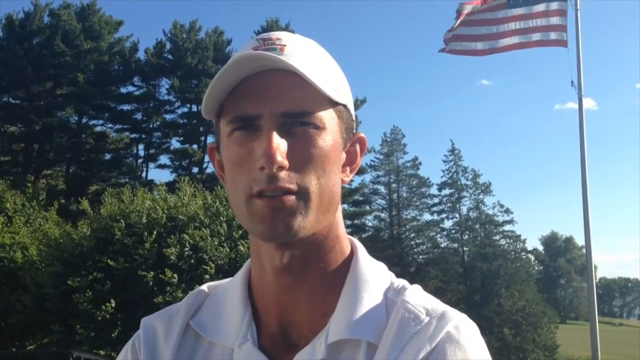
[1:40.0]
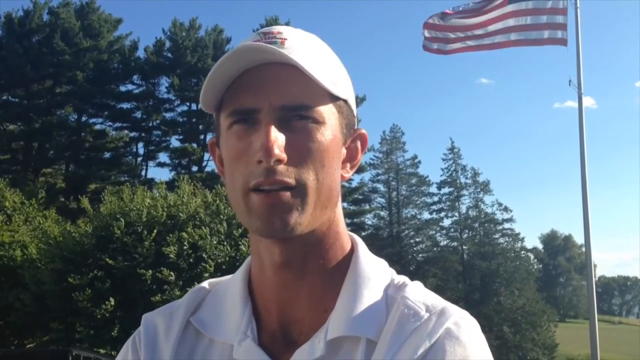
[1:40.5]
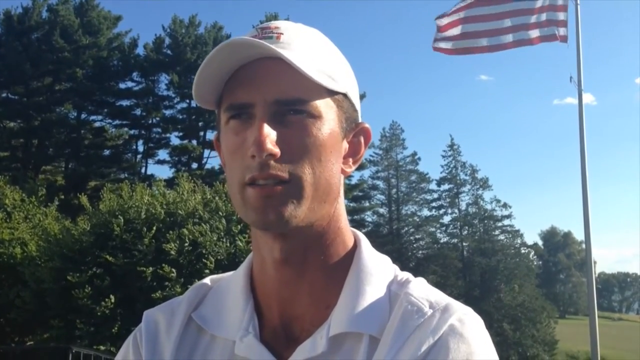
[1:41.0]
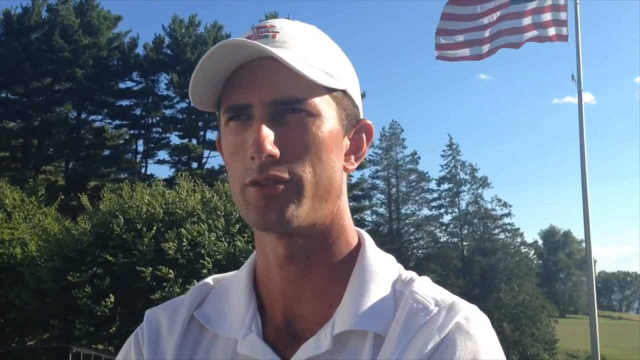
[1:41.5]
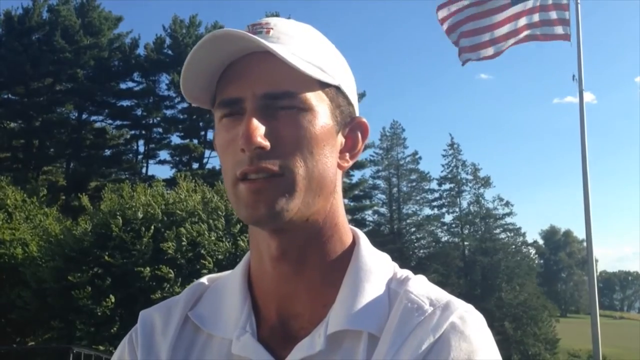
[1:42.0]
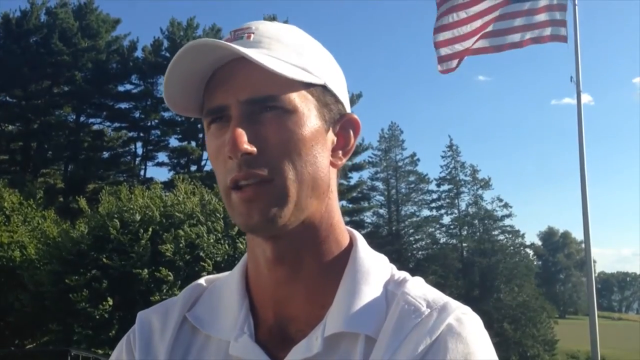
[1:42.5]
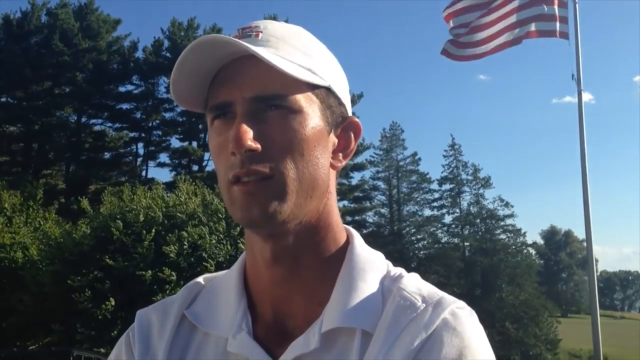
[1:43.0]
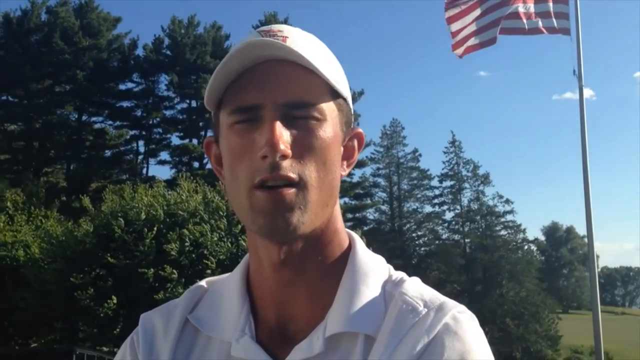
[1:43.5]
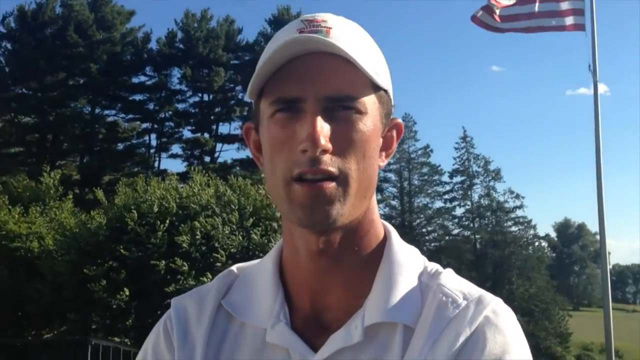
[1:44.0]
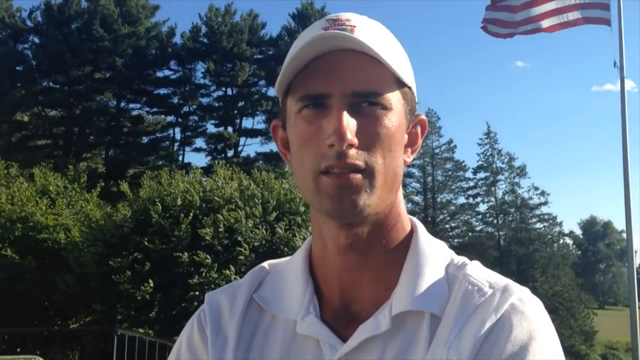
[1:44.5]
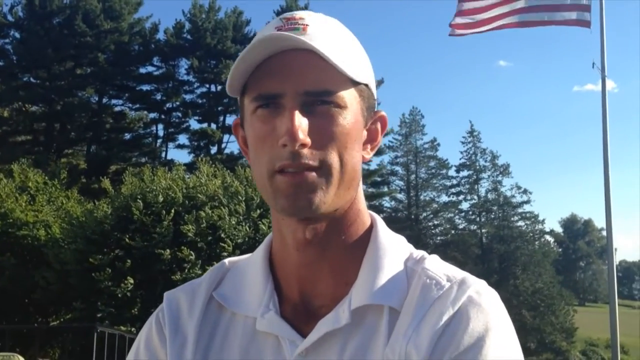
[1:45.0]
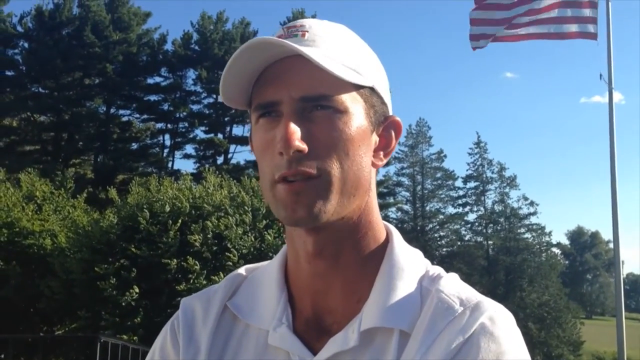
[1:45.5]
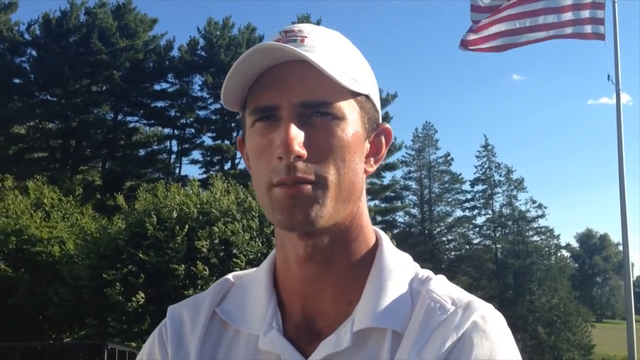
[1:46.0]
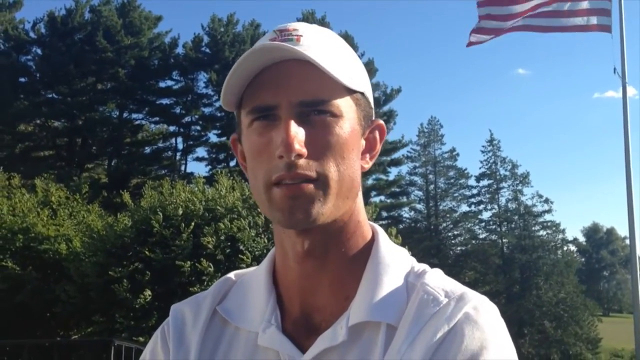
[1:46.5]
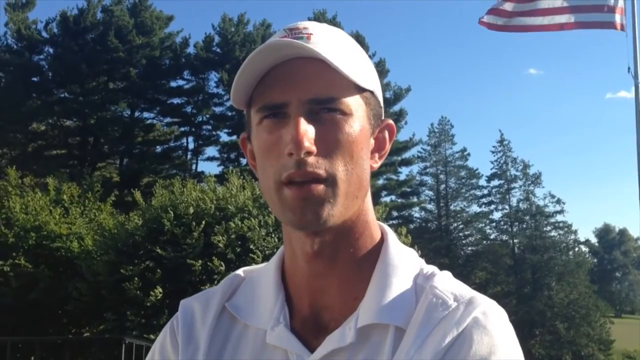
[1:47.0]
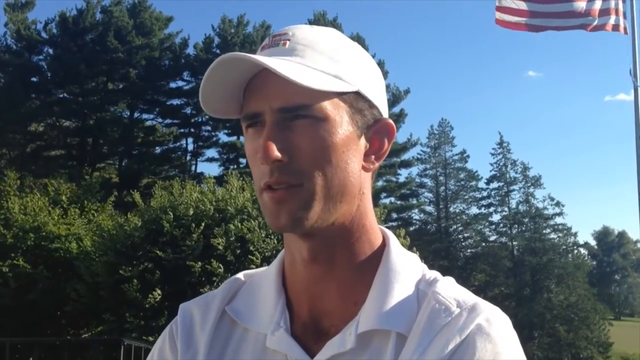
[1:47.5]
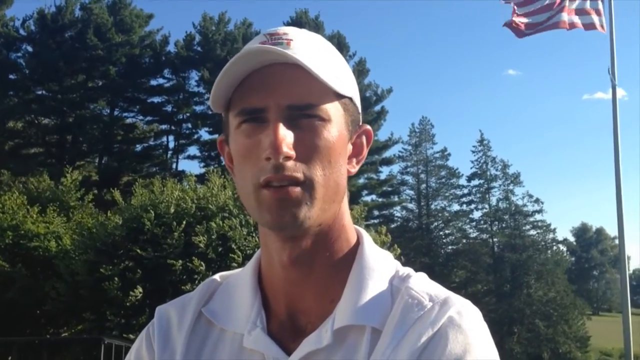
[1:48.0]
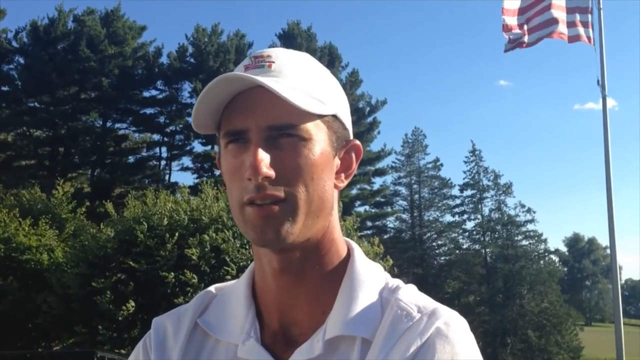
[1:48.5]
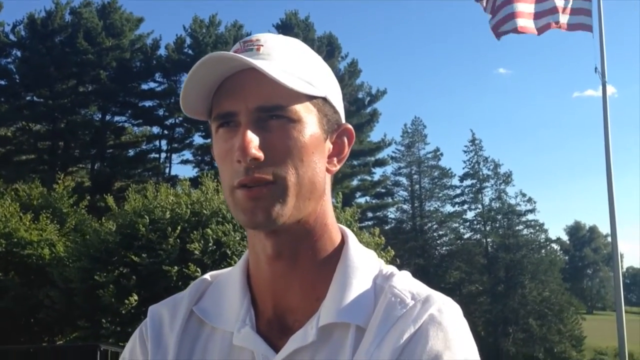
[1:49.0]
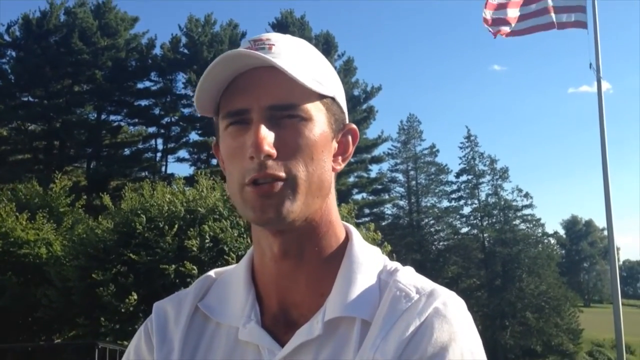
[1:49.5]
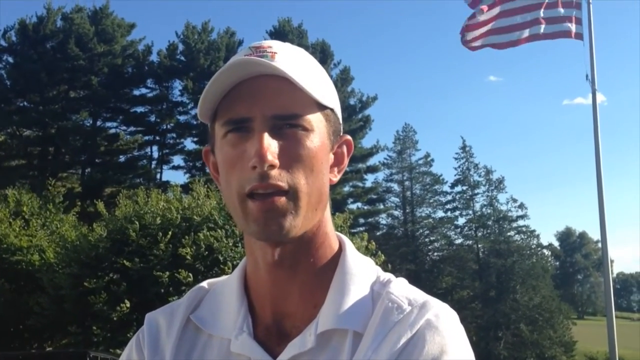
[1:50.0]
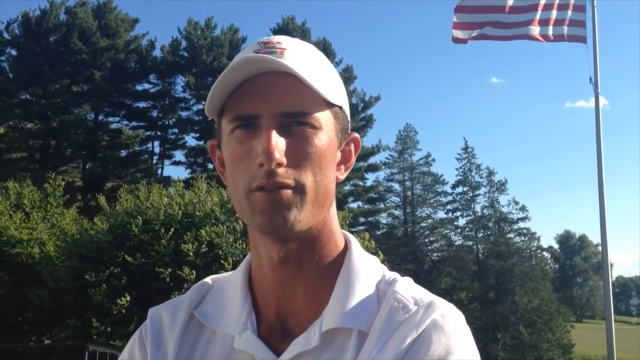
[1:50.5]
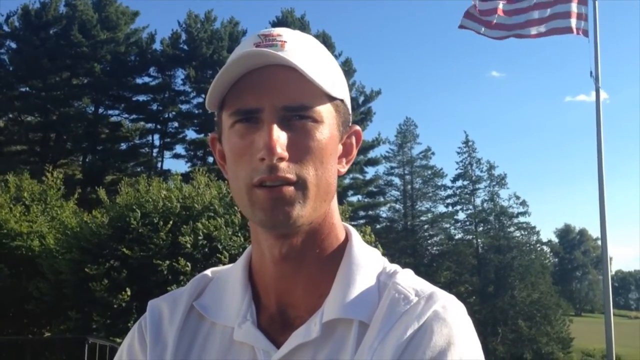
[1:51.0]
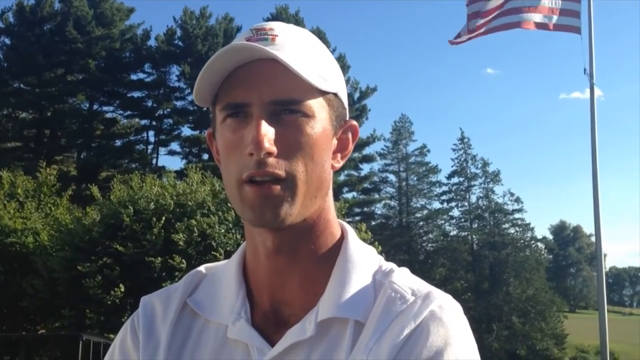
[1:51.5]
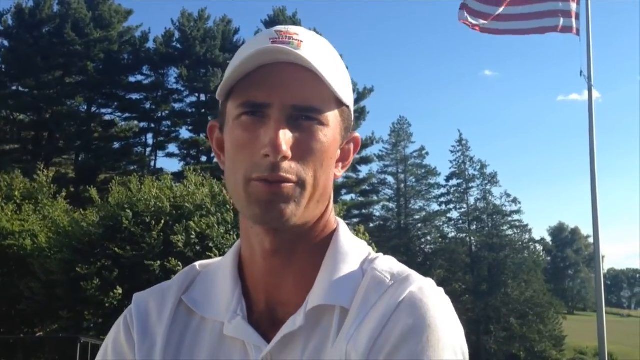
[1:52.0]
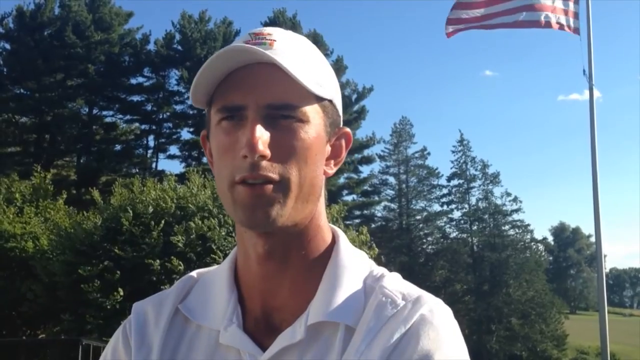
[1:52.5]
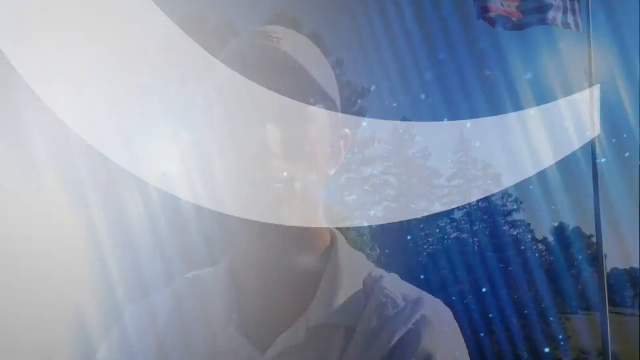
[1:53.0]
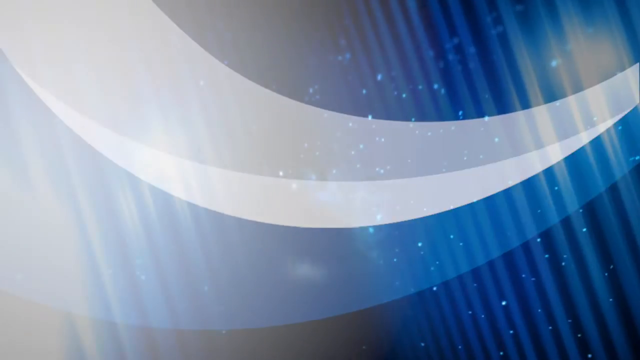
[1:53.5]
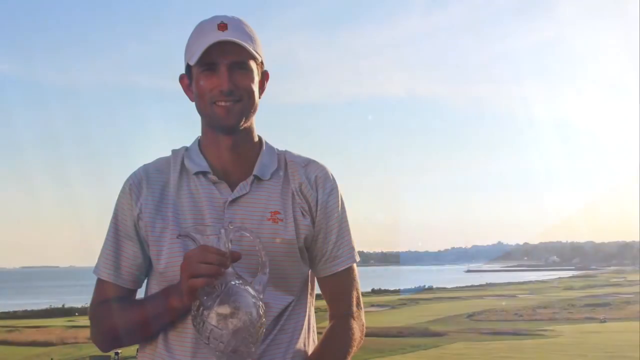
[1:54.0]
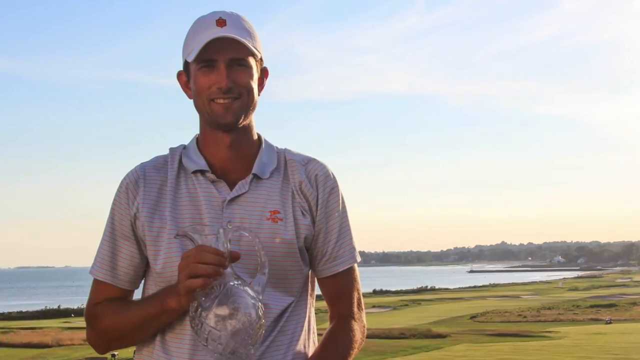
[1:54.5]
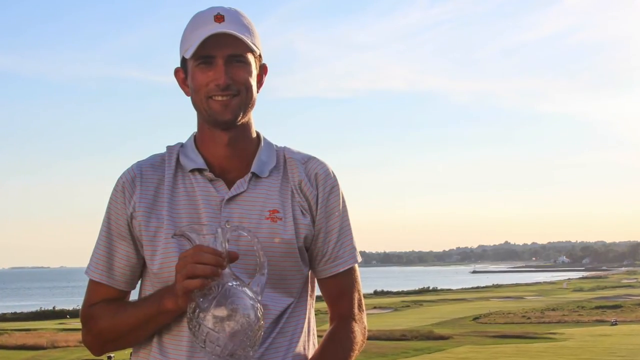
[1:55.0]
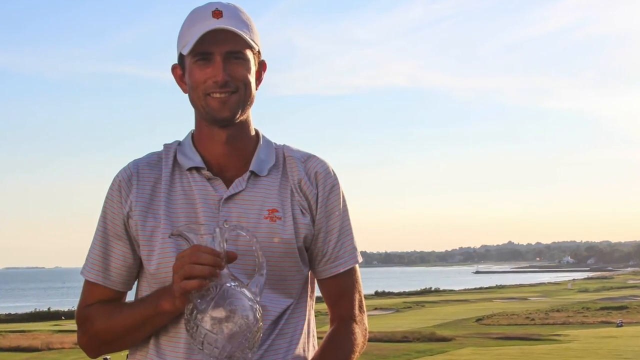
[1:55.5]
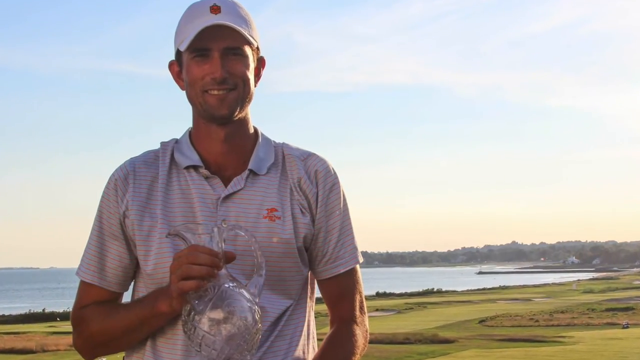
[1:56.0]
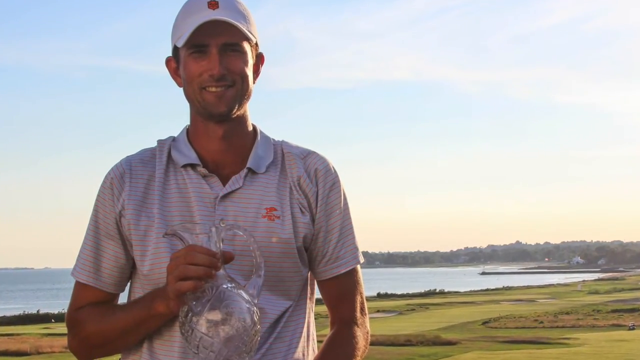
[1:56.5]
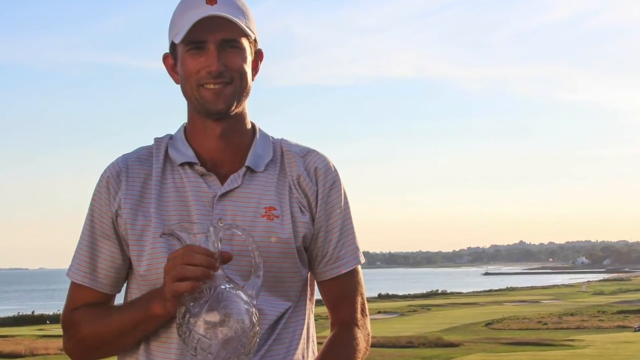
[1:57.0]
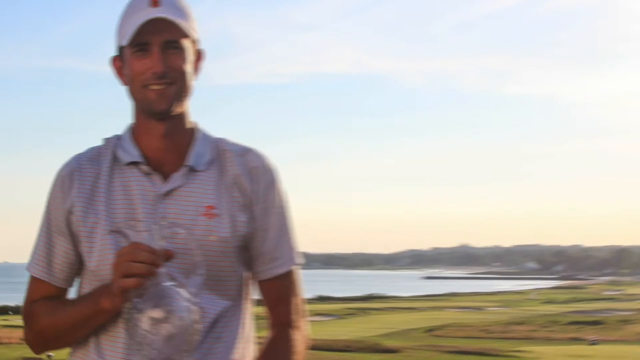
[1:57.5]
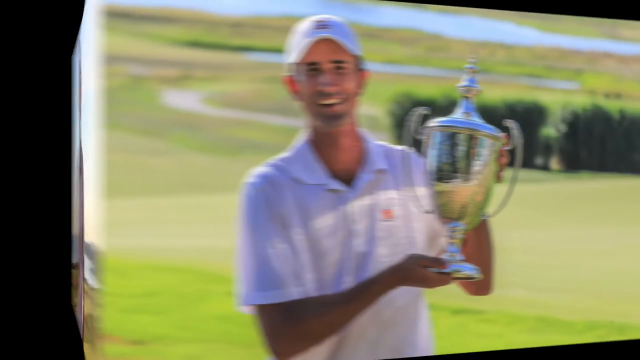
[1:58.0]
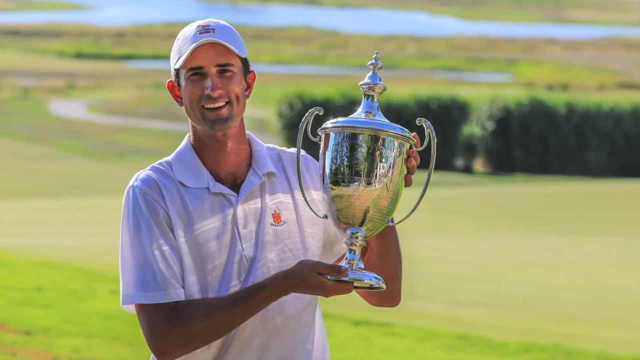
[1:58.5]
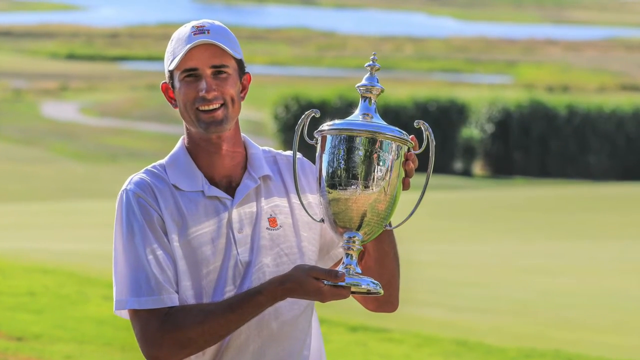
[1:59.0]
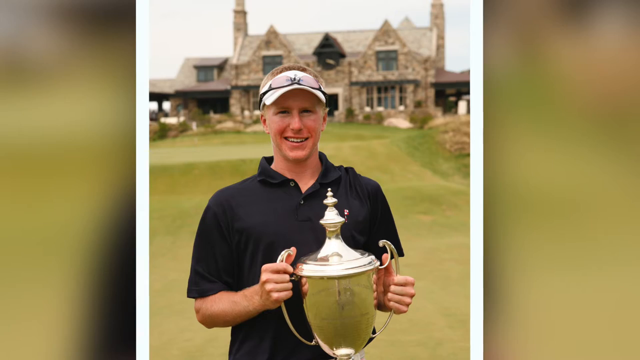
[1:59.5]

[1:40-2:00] The man continues being interviewed, with some trees behind him and a quite large American flag flying on a pole. Another blue graphic transition leads to a photograph of the man, seemingly the winner, with a glass jug that appears to be some kind of prize, with the golf club in the back. It then cuts to a picture of him holding a silver trophy. He is smiling with his lips apart and wears a white cap with a red emblem and a grey and white horizontally striped polo shirt with a red emblem on the chest. The sun seems slightly lower in the sky and starting to set.